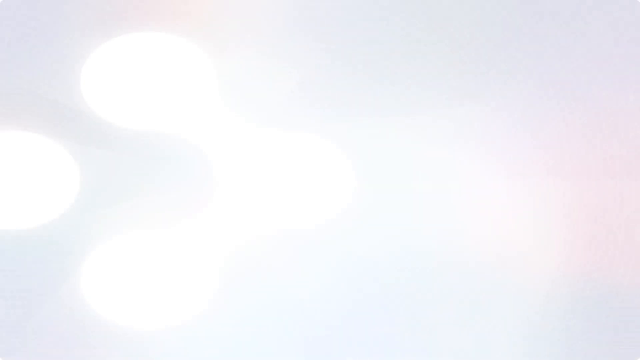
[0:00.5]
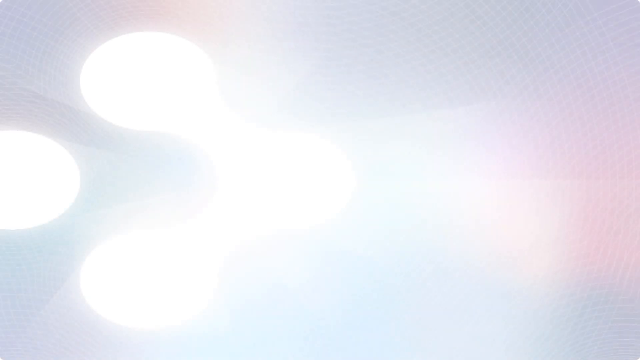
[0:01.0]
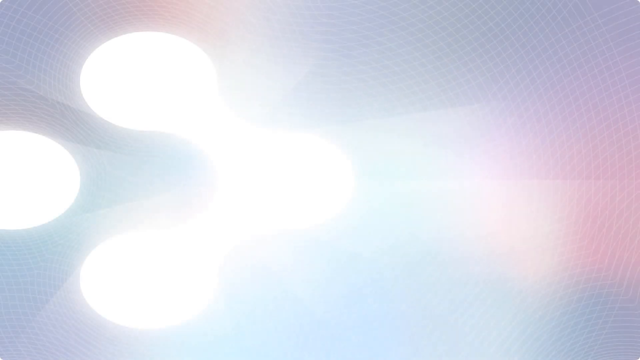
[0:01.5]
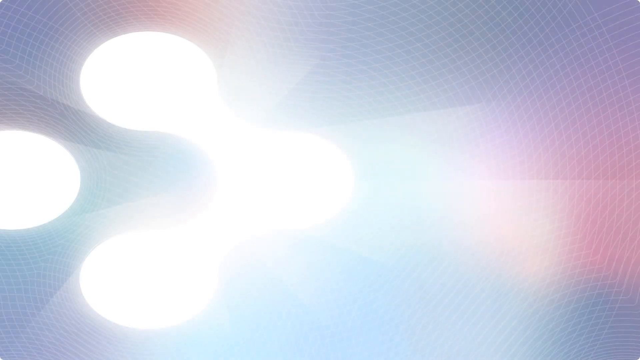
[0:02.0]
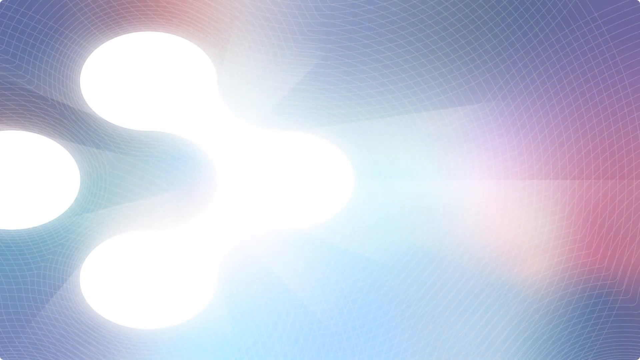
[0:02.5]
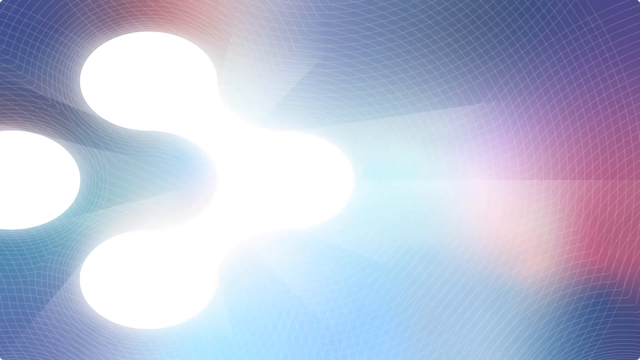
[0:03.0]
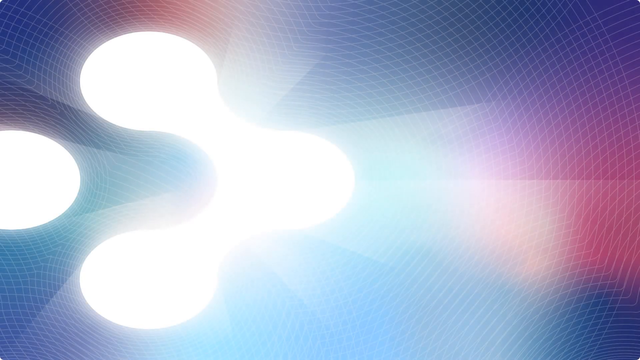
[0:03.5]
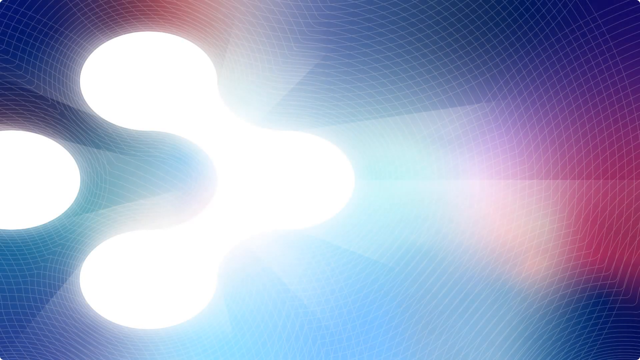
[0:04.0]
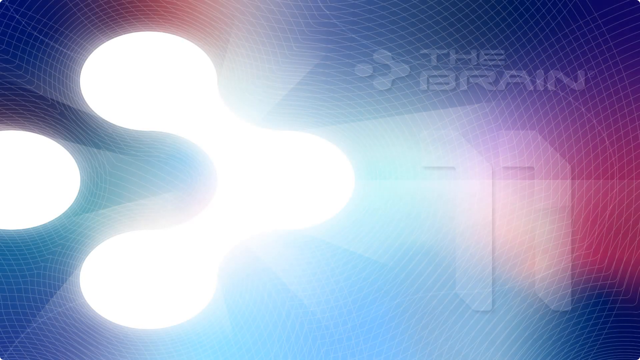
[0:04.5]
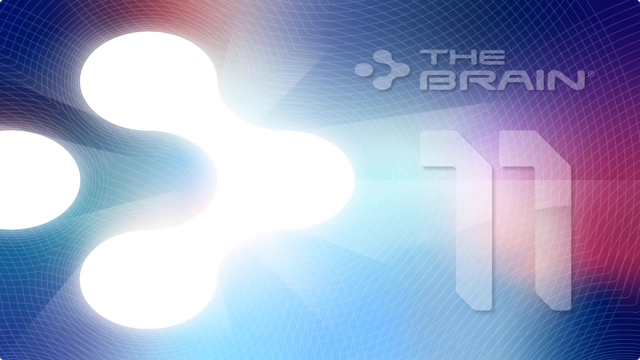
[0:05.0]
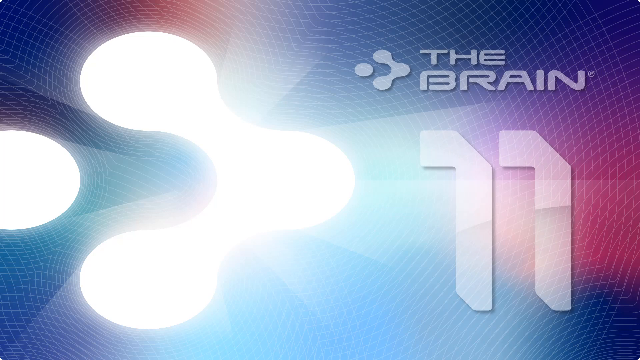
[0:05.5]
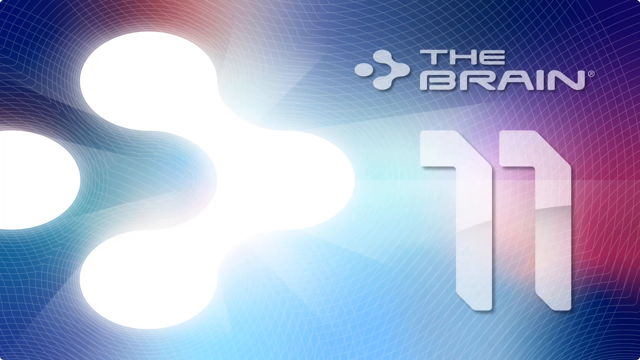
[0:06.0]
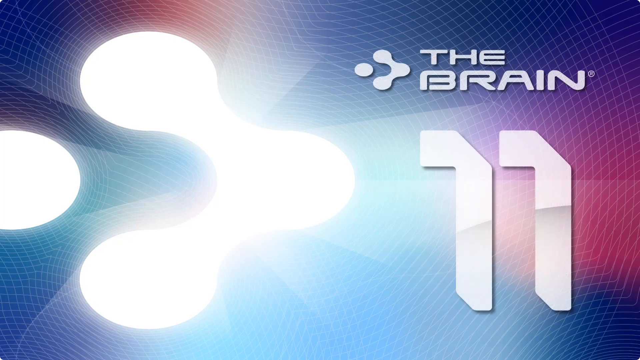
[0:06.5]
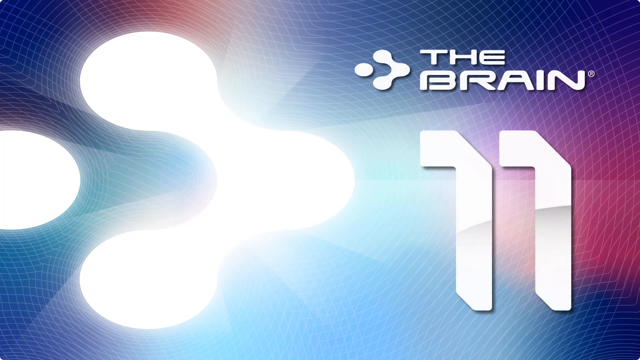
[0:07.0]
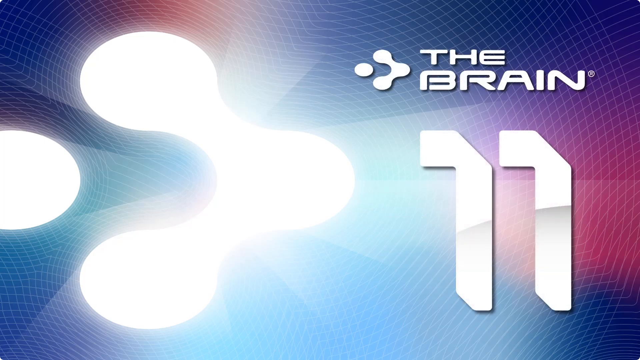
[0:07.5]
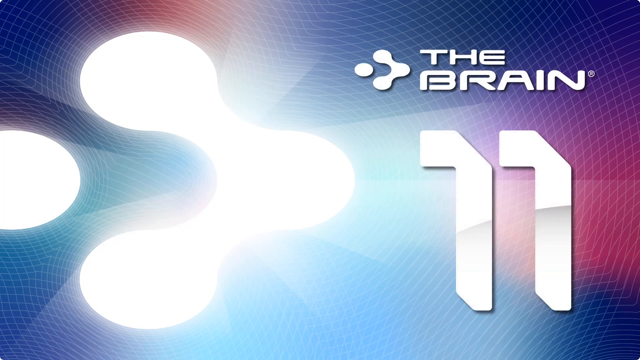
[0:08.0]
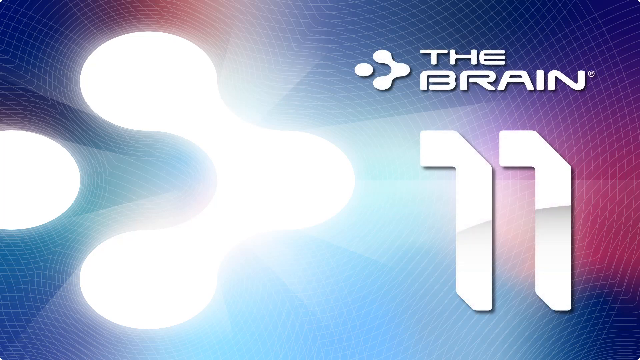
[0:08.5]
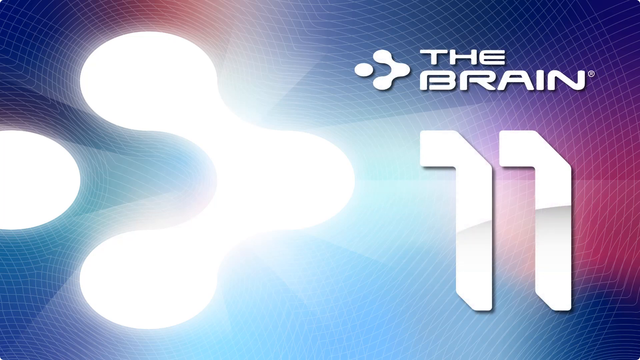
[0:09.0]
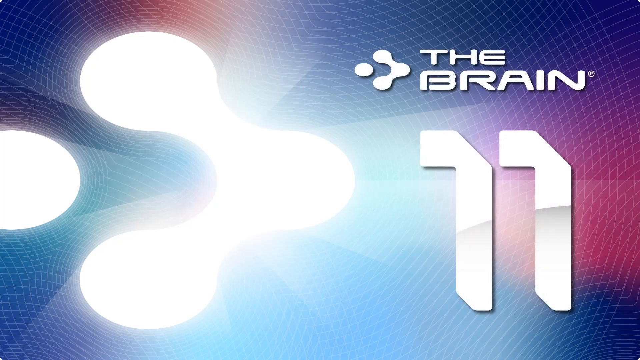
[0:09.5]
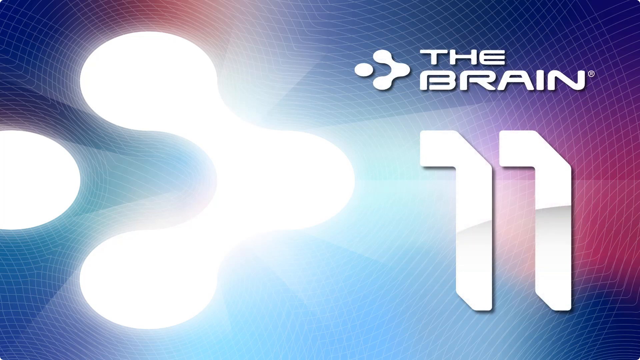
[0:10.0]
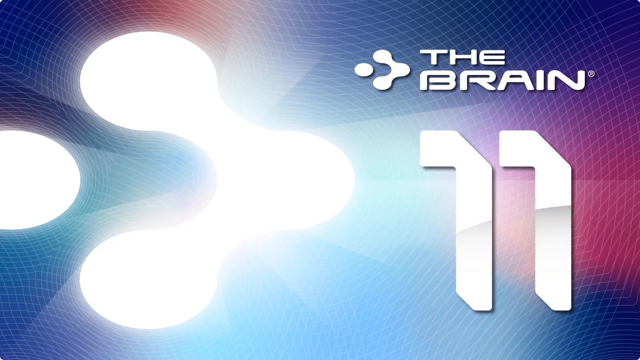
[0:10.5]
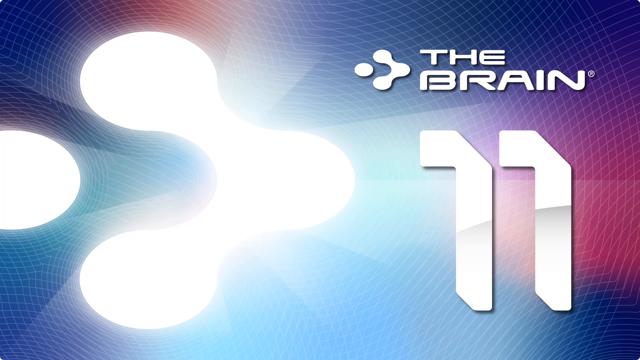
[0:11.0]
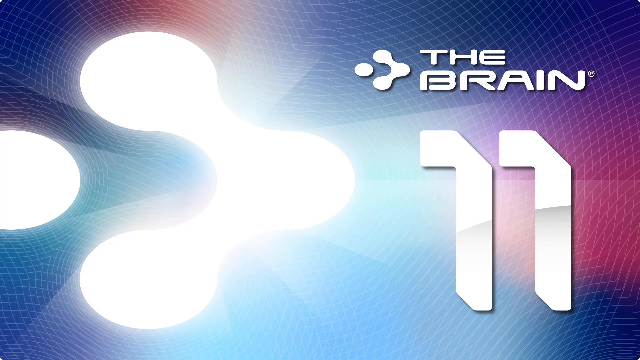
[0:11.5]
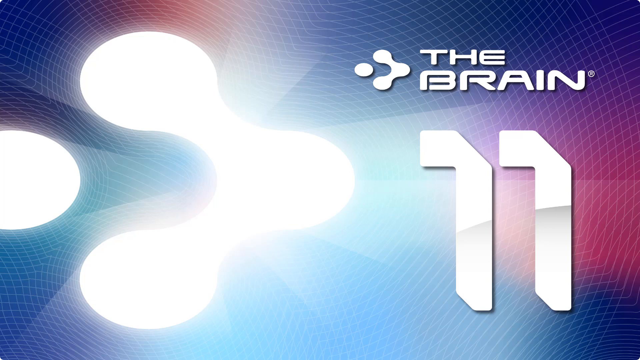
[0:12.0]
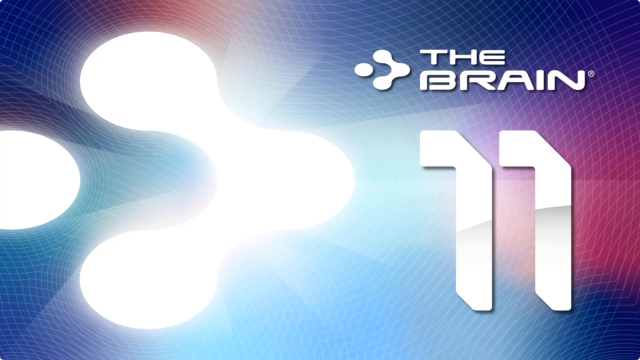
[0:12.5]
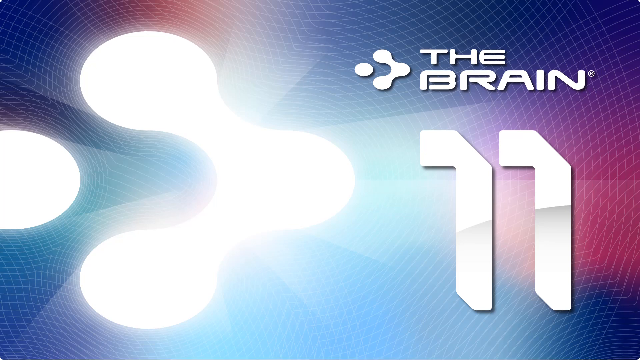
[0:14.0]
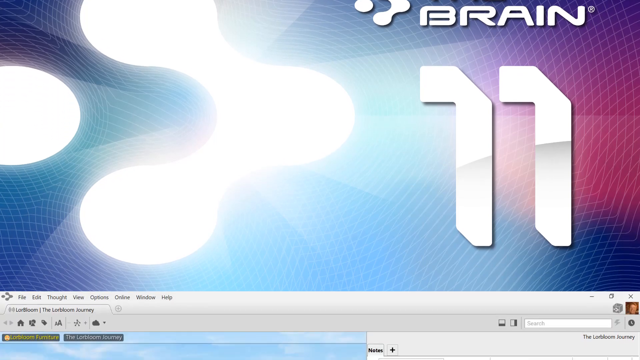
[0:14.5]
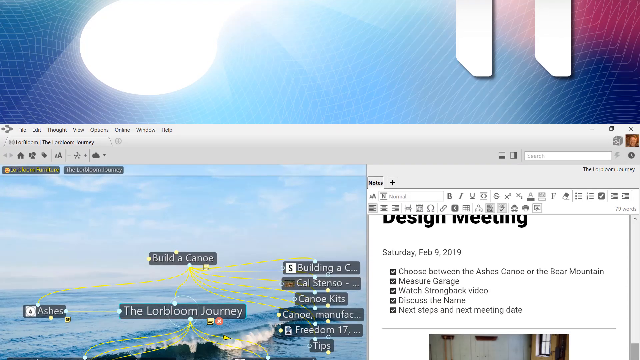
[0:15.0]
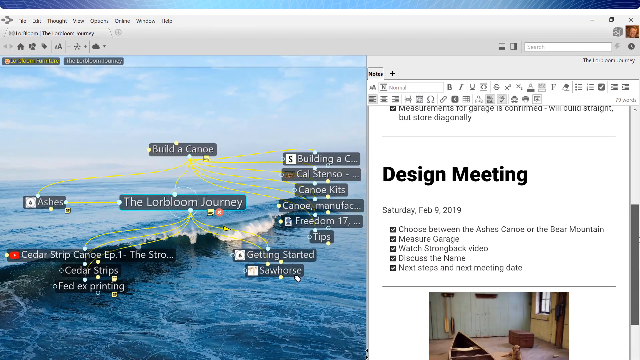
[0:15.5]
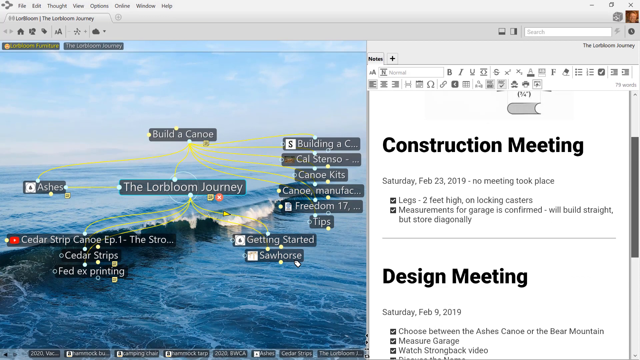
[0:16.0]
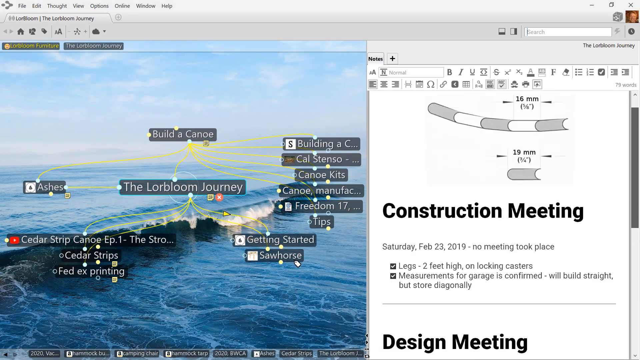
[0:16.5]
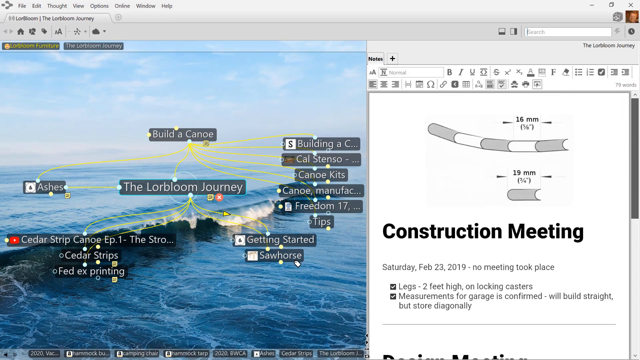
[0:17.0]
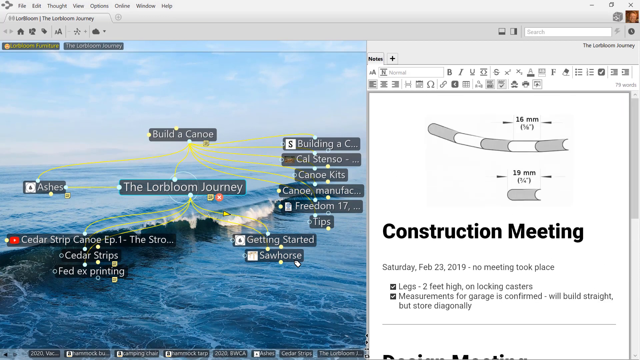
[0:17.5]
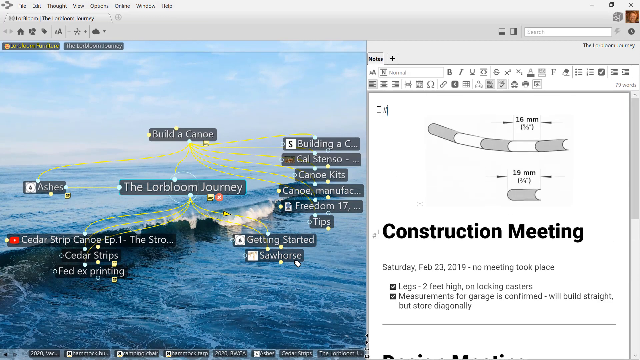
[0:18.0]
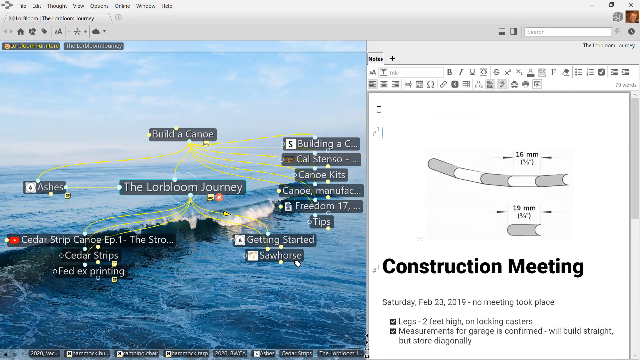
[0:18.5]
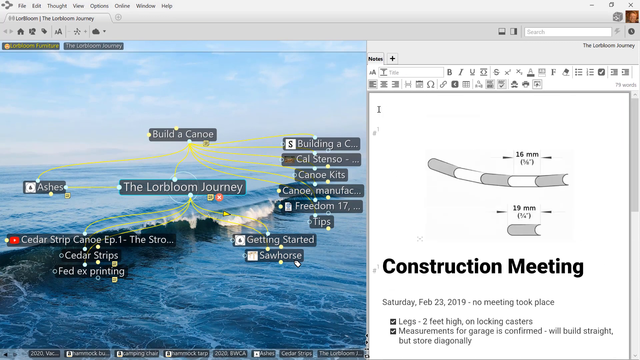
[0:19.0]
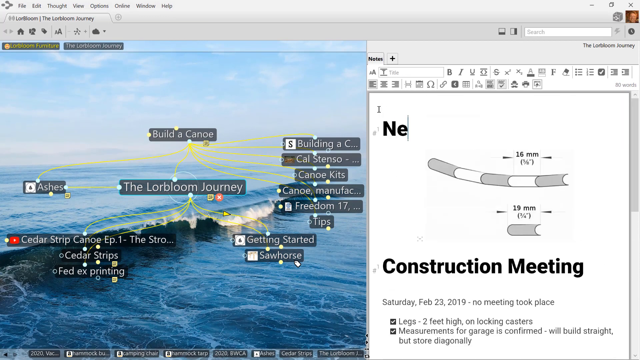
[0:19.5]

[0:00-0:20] The video fades into some kind of computer graphic or special effect that looks like a series of grids, almost like a kaleidoscope, with bursts of white spheres. It slowly turns into the name of the company, "the brain", shown with an effect; underneath it is what looks like 1 1 or 11. The logo almost looks like a lava lamp inside: three interconnected white spheres all connected together, with one whole sphere to the left of them. The background is almost like a kaleidoscope or cobweb of interconnected grids, with reds, blues and purples meshed together. The screen then changes to "Construction meeting" with the day "Saturday February 23rd" and "No meeting took place". It apparently shows the construction plan for building a canoe. Someone starts to type "next", and then the screen goes blank.